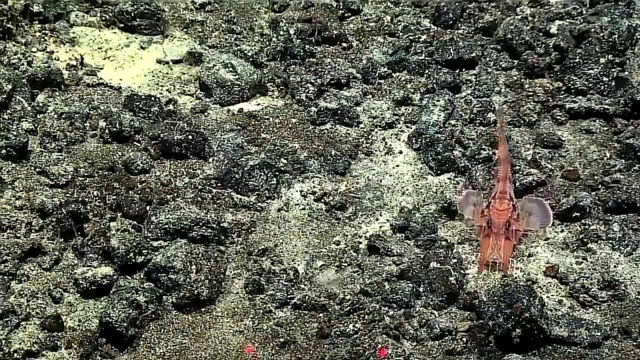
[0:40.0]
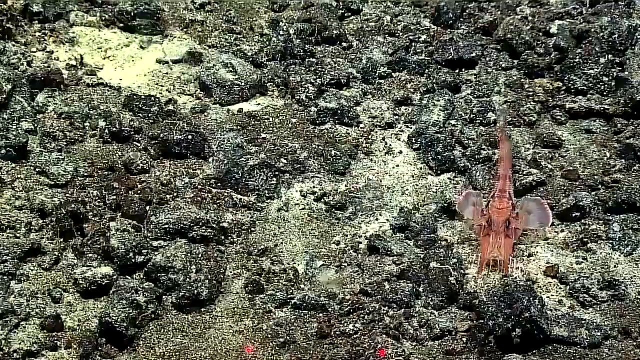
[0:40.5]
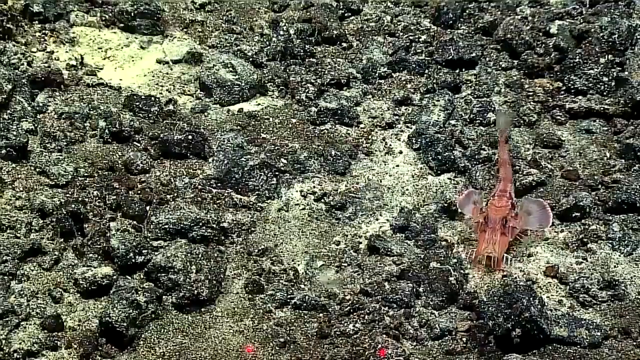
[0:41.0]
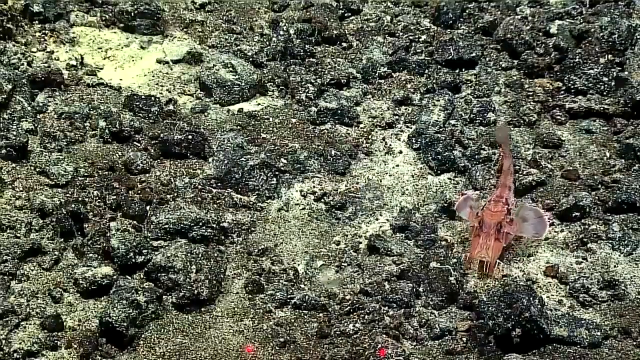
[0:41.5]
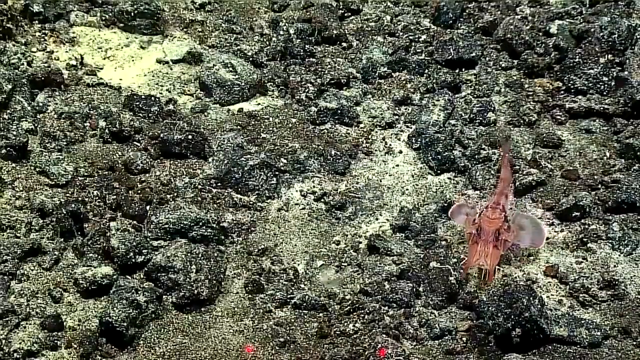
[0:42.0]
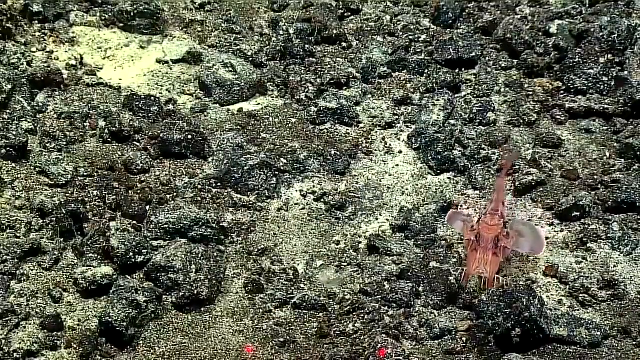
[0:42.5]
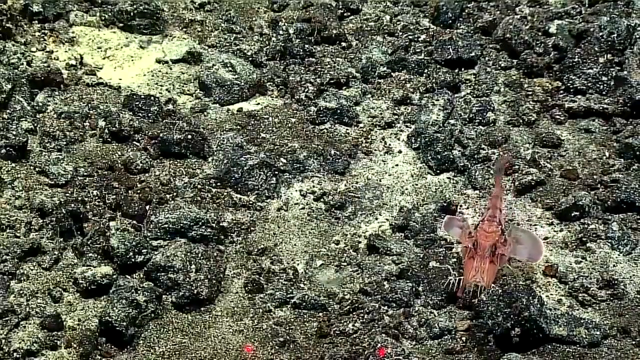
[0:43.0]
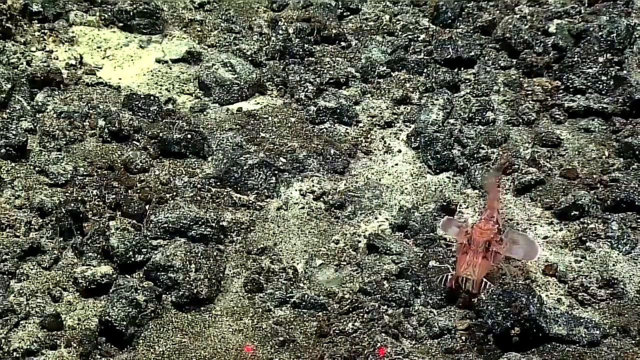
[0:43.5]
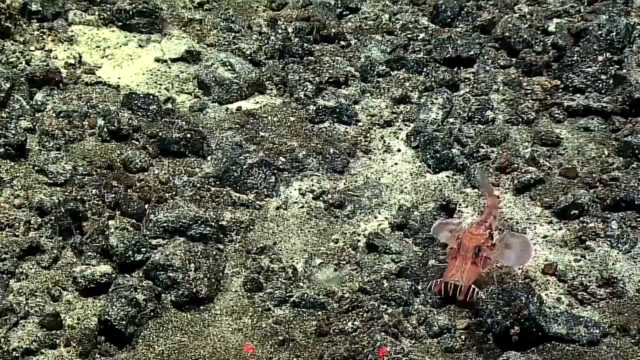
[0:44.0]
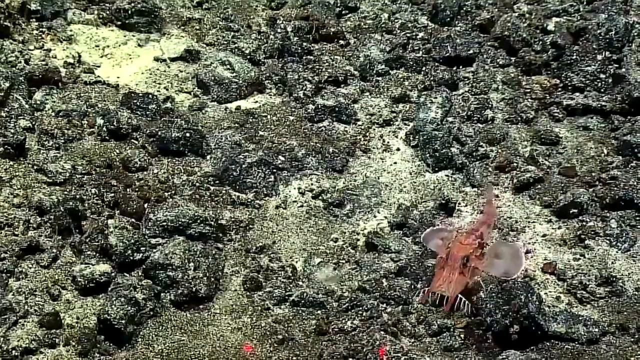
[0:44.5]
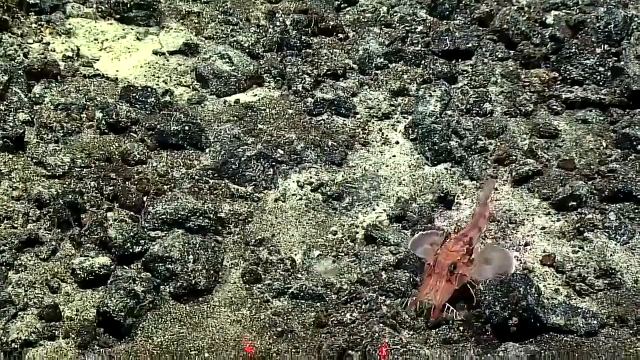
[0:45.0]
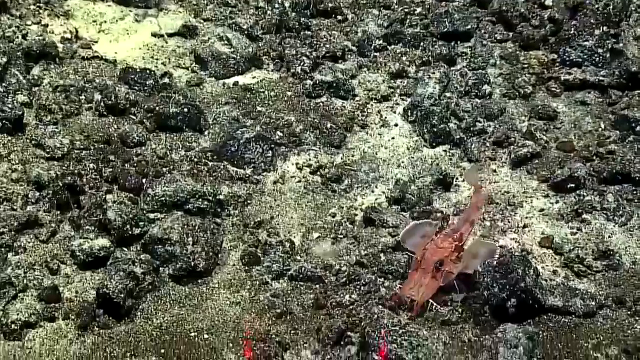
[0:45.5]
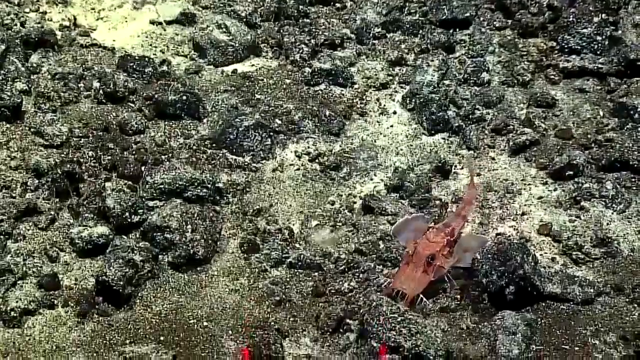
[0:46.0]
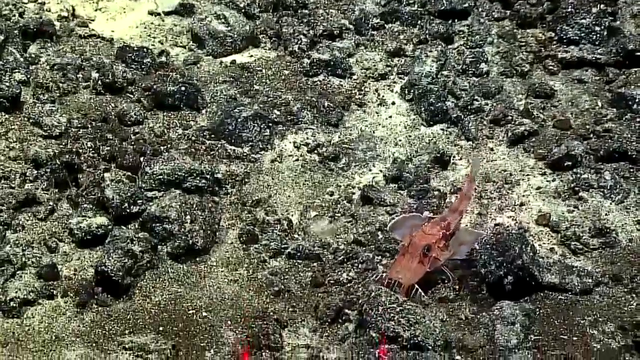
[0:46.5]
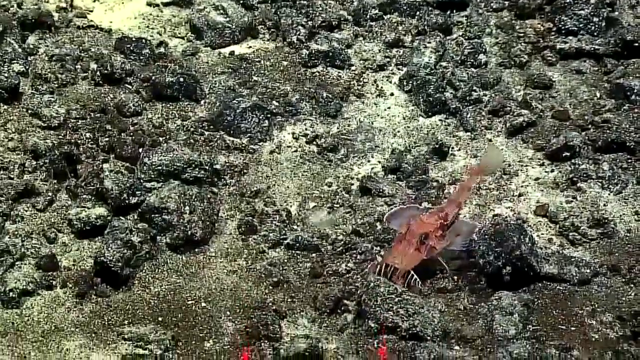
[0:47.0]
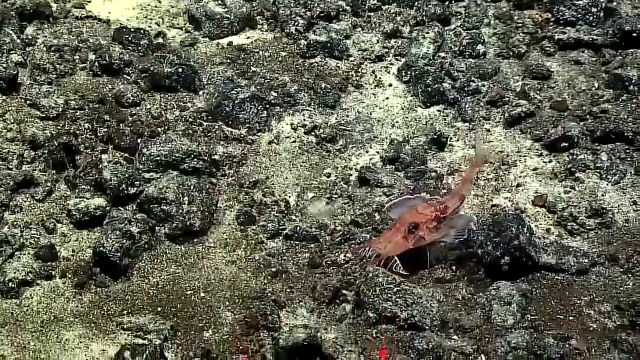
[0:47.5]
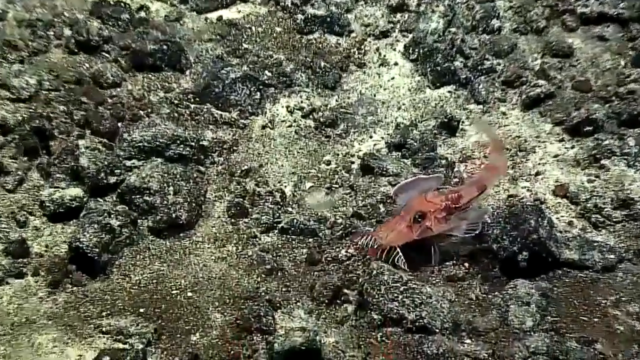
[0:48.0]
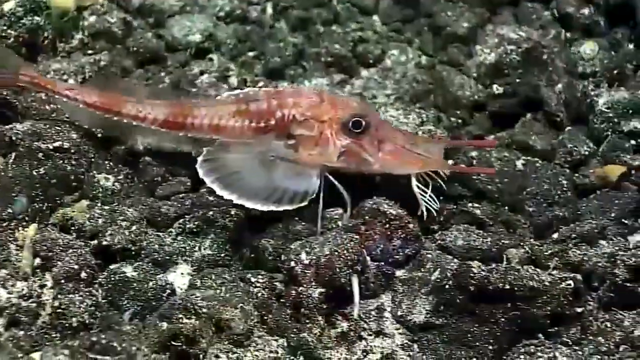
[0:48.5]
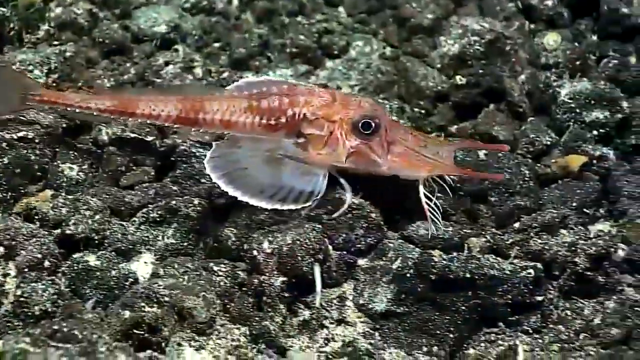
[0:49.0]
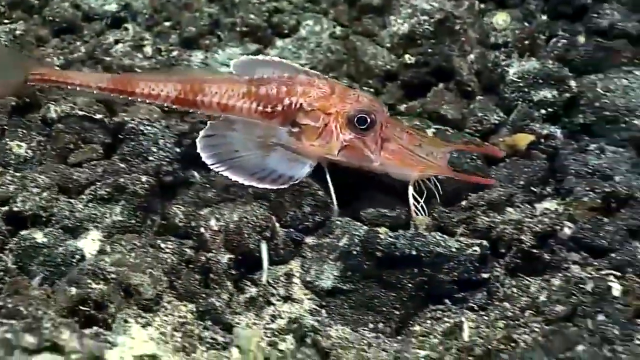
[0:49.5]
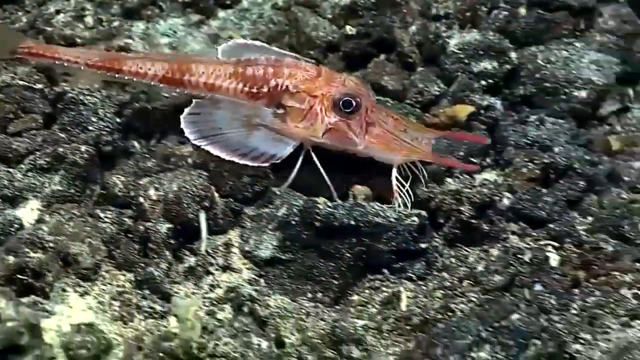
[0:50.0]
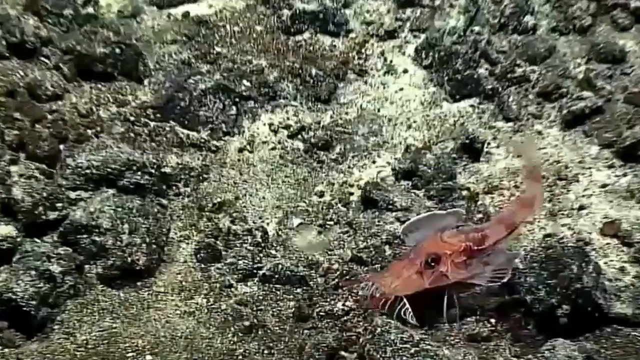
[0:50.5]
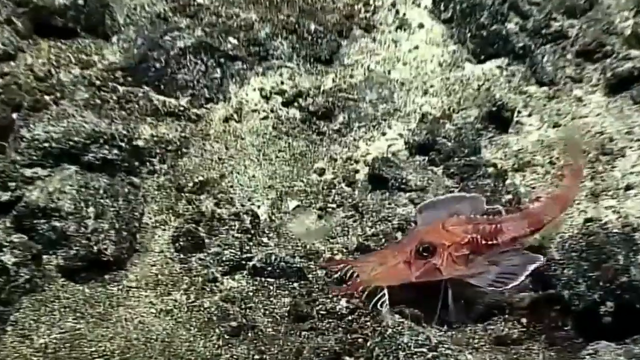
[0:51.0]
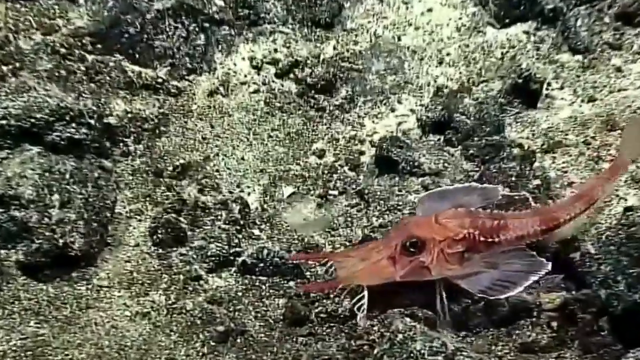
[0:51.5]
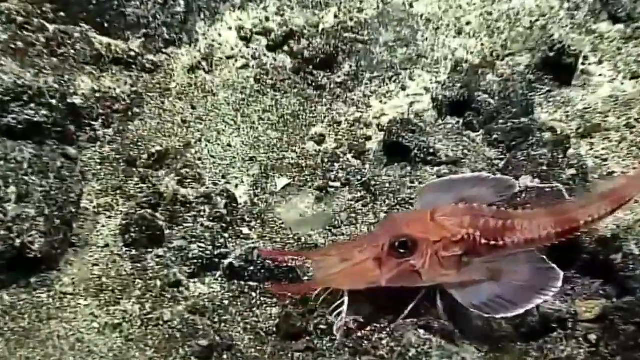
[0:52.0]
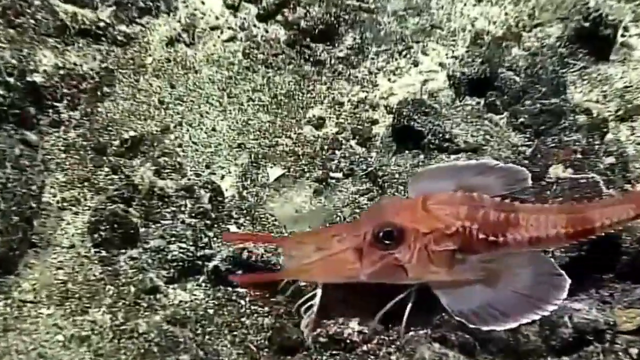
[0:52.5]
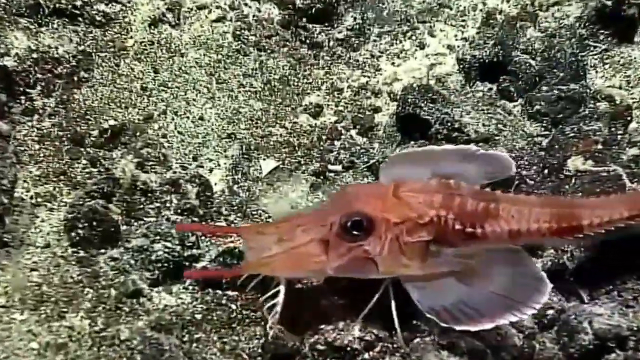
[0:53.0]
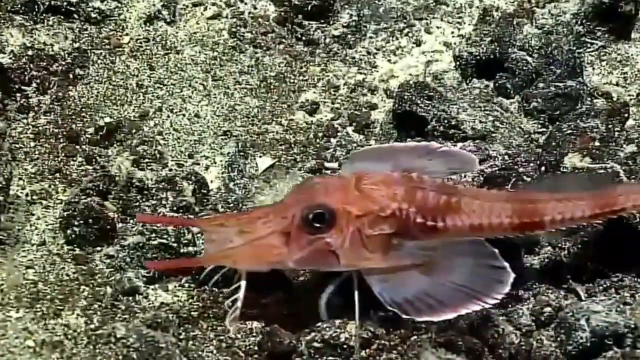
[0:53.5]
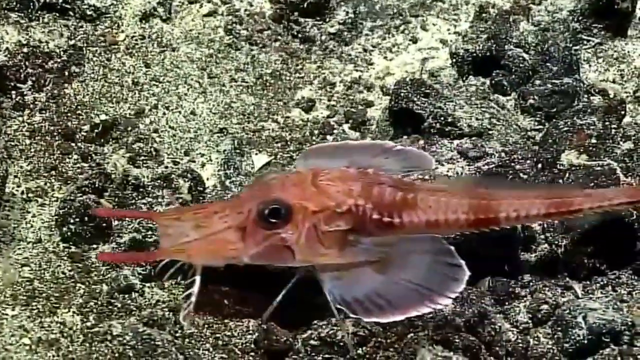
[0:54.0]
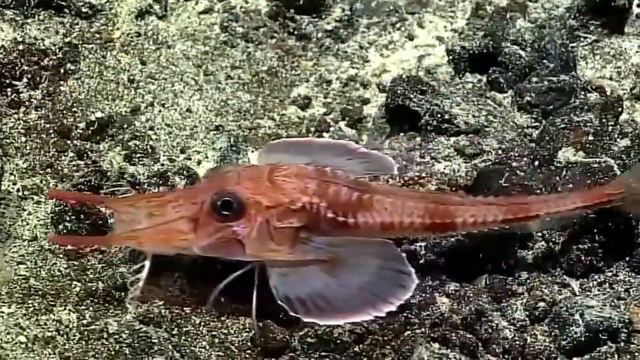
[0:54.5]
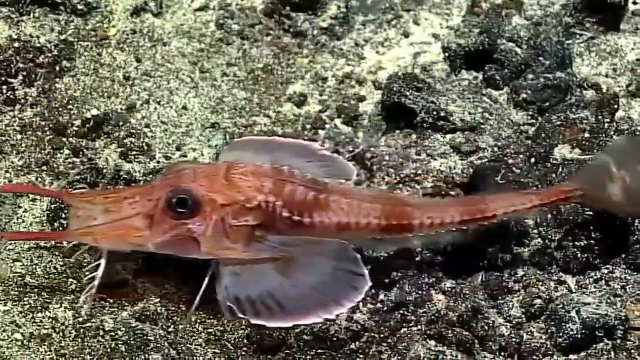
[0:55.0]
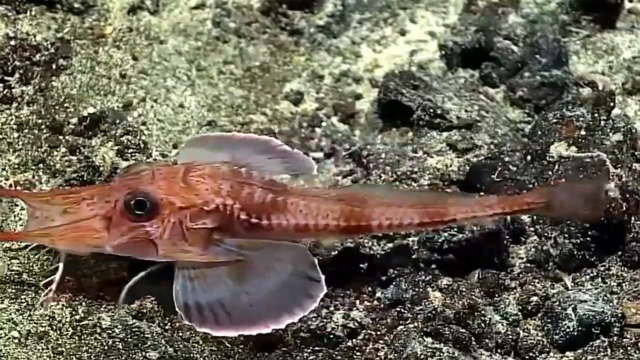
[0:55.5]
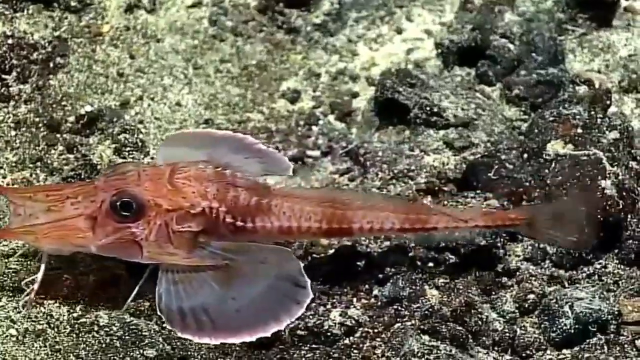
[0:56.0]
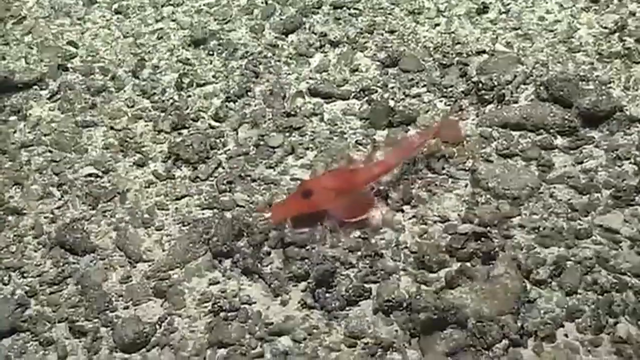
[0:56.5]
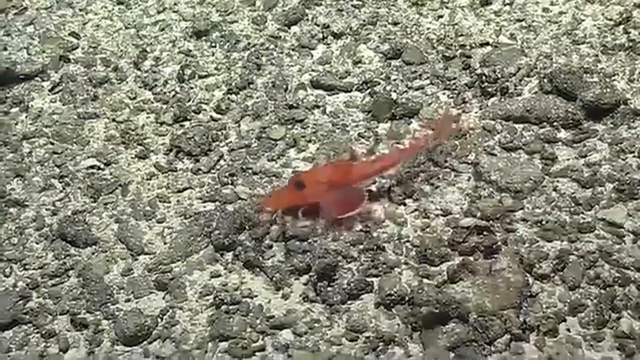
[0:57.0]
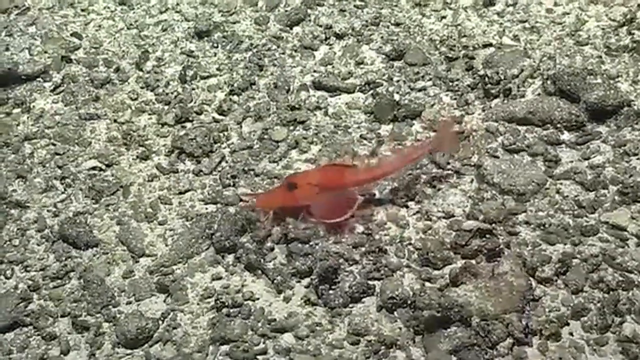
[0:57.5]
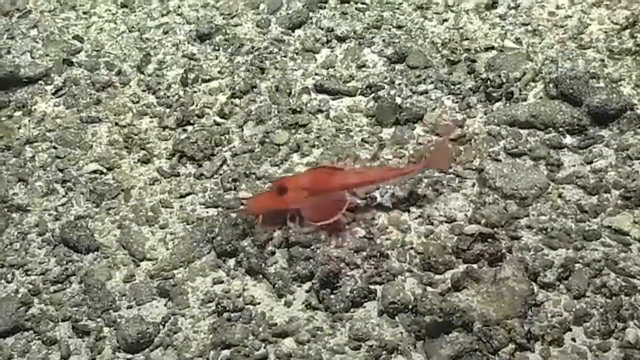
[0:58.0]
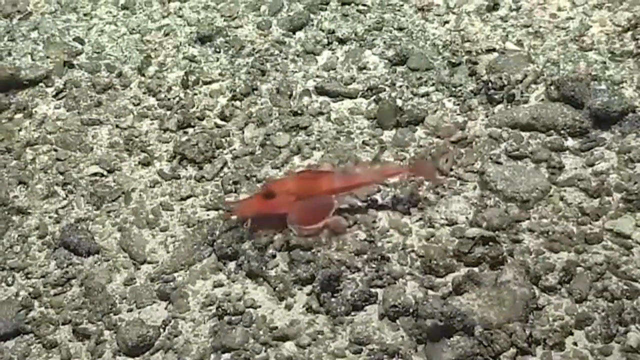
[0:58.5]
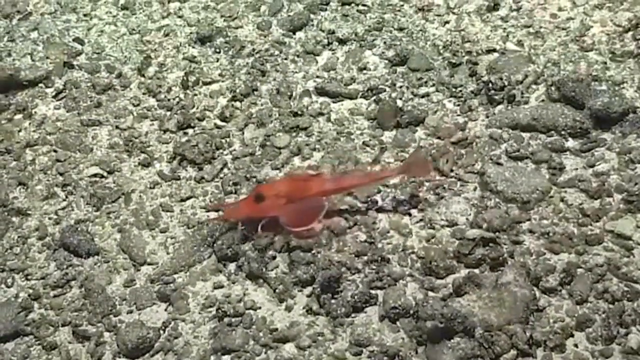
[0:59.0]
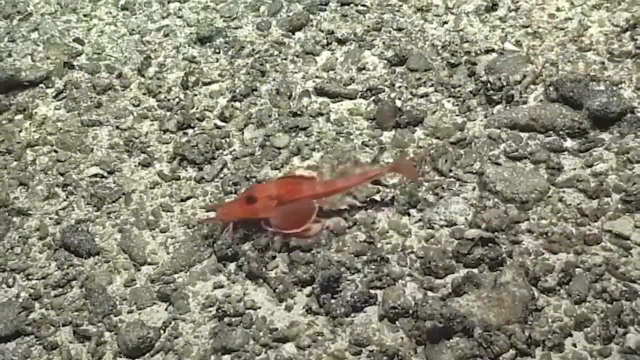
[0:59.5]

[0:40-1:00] The fish is shown once again against the dark-tinted background, with the rocks in black and white and the red fish on the right side of the screen. Its mouth faces the bottom of the screen, and it is seen in an approximately top-down view, swimming towards the bottom border. The camera pans down slightly to follow the fish as it moves, the fish turns slightly towards the left side of the screen, and the camera zooms in. The camera angle then changes, showing the fish swimming towards the right side of the screen; this time the fish looks to have many more white accents and a red mouthpiece. As it swims right, the camera zooms in, and then the angle switches again to show the fish at the bottom of the screen swimming towards the left. The camera zooms in on its body as it swims, its transparent gills and fins moving around. The angle switches once more, showing the fish in the center of the screen swimming left against a rocky background, before the video transitions to the fish against a sandy background.